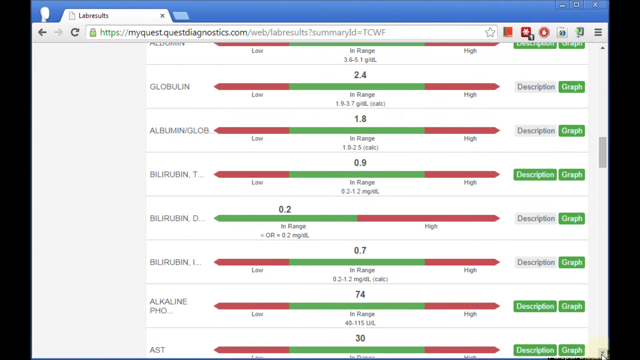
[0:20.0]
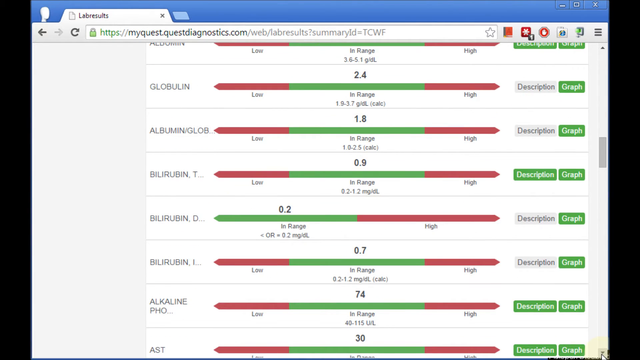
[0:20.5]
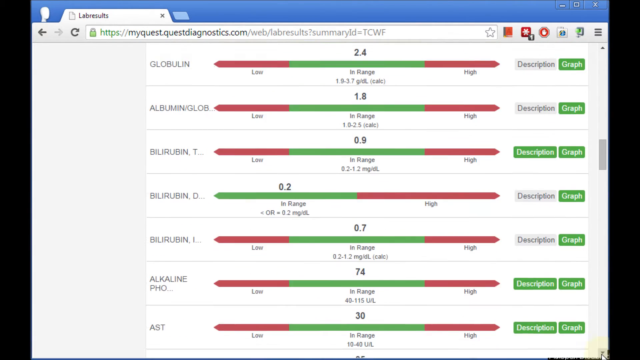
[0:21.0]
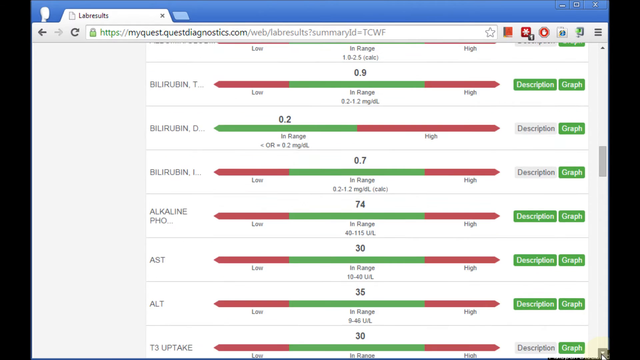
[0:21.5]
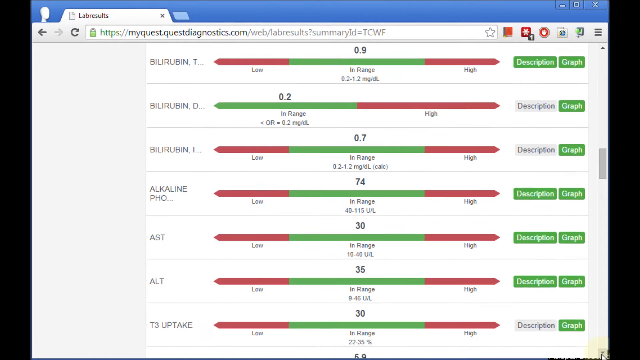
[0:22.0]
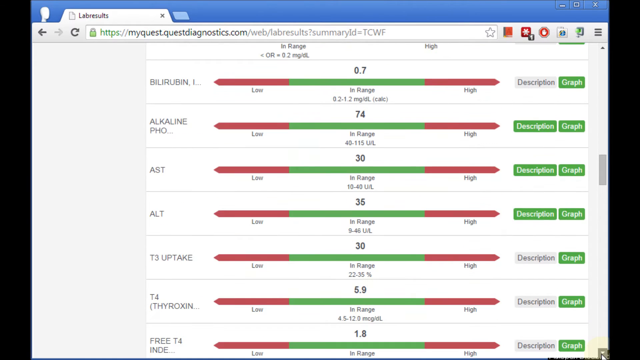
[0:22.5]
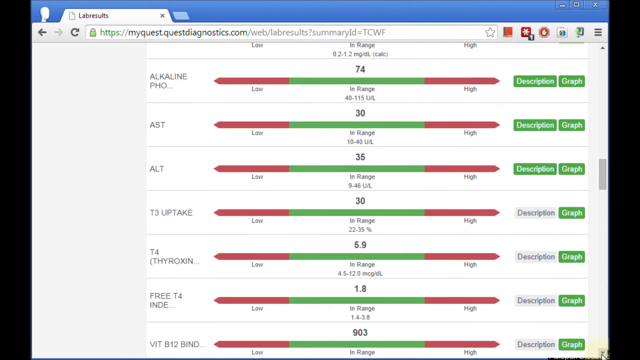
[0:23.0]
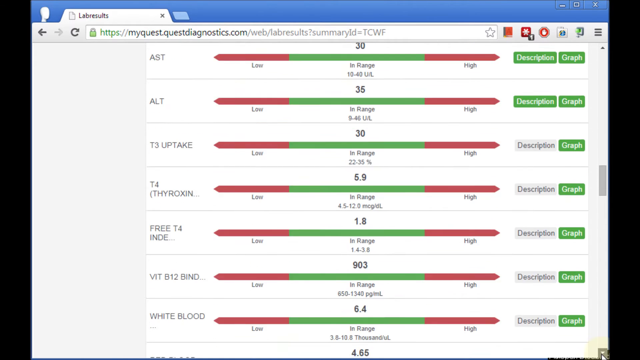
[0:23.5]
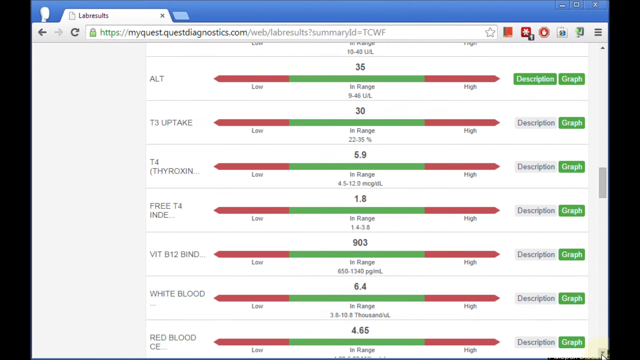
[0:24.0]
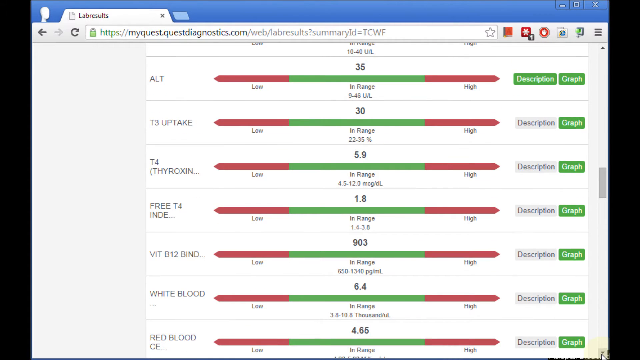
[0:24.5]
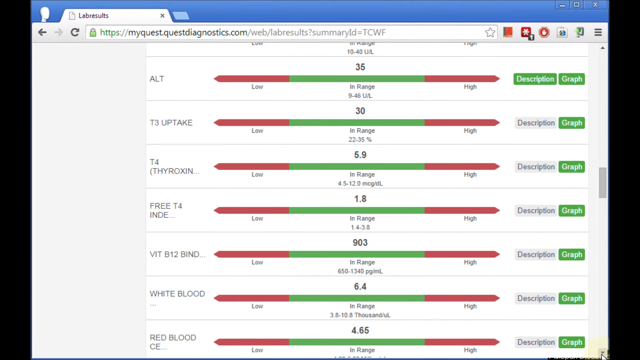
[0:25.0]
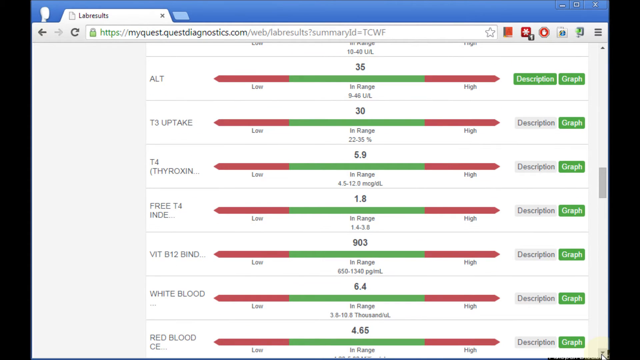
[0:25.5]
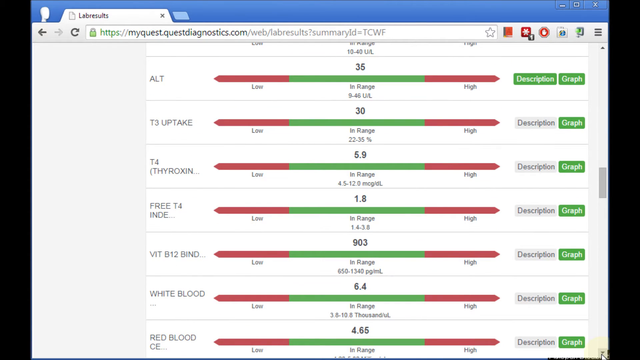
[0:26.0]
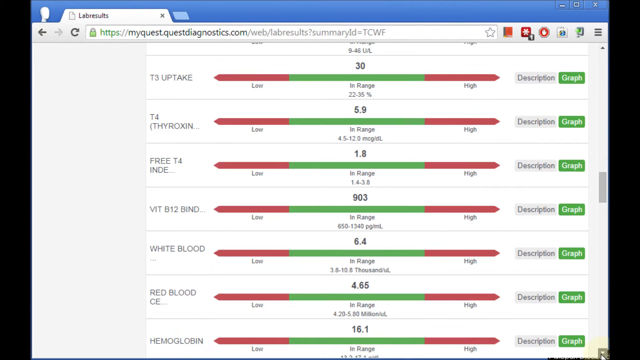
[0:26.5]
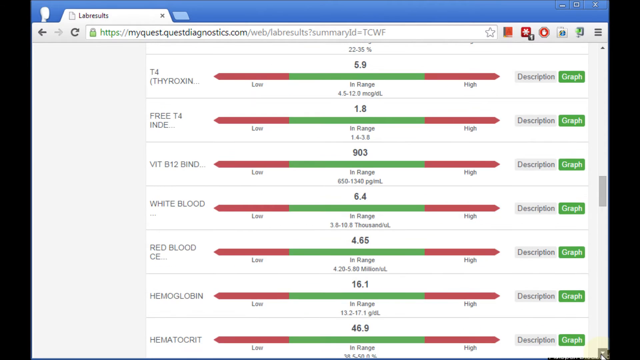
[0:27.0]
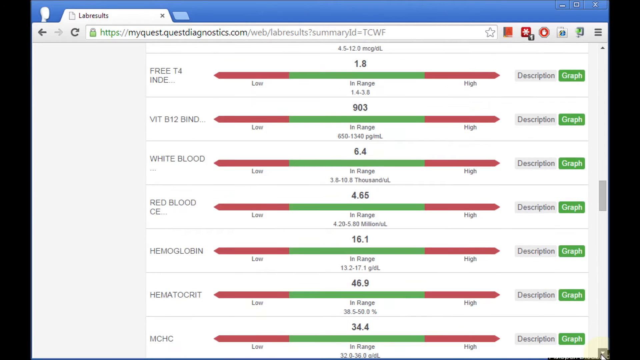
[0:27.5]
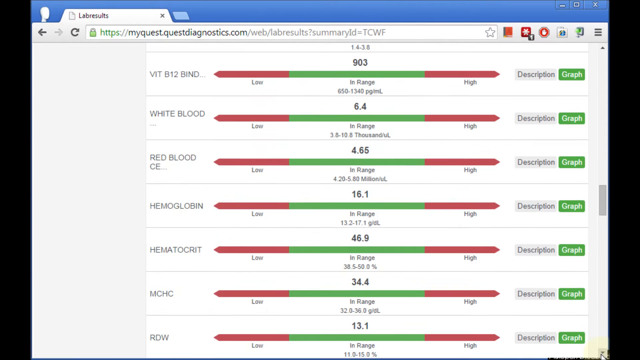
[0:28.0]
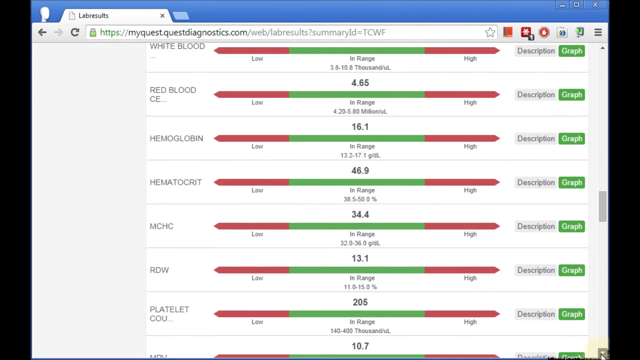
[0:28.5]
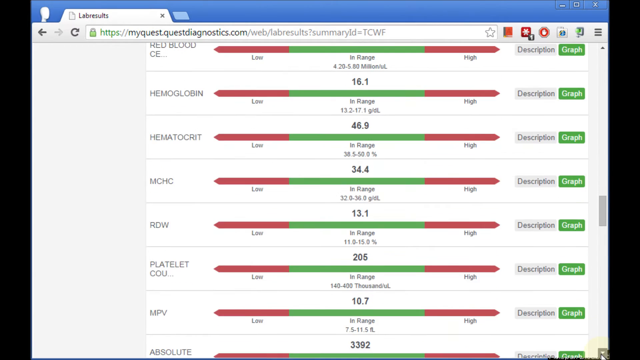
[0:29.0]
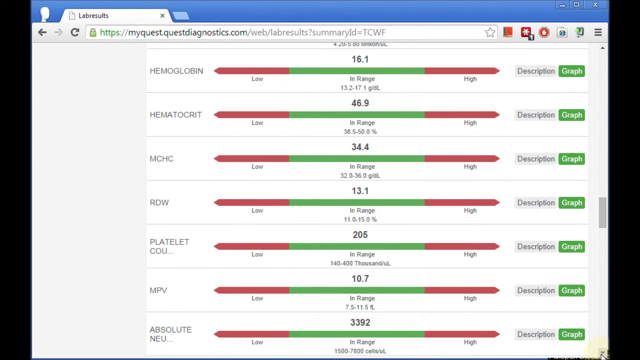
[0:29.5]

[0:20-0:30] The person is on the Quest Diagnostic website, going over their lab result summaries. The screen lists each lab result alongside a line graph showing the score and whether it falls in range or in the high range. A toggle button allows choosing between graph and description. The person moves down through the results, which include ATL, T3 uptake, white blood cell, red blood cell, hemoglobin, hematocrit, MHC, RDW, and platelet count, and keeps scrolling down. All of the results being viewed are in range.